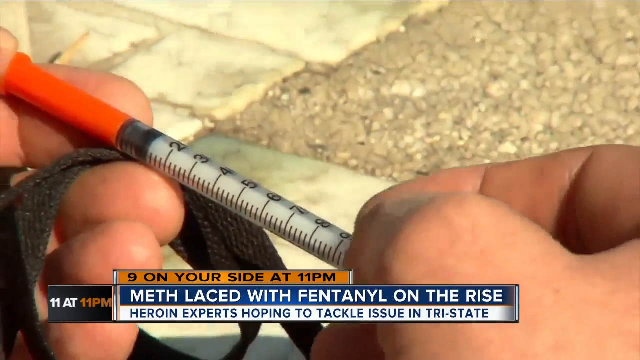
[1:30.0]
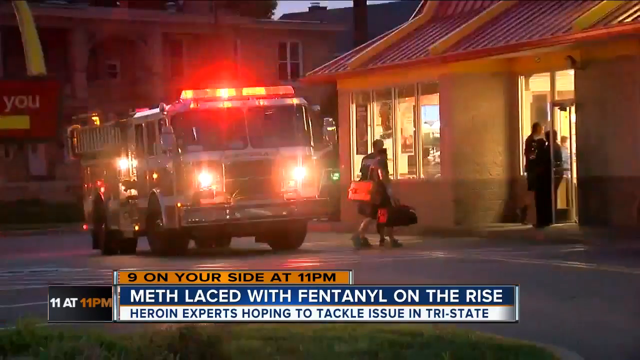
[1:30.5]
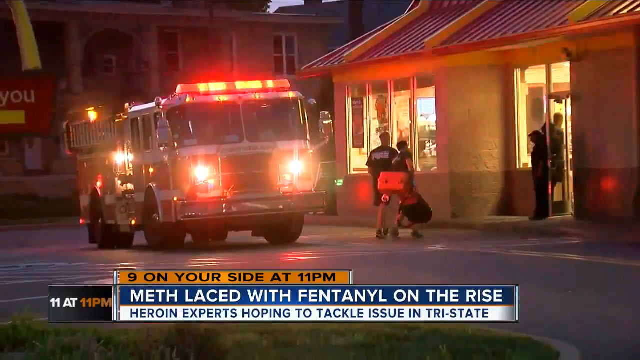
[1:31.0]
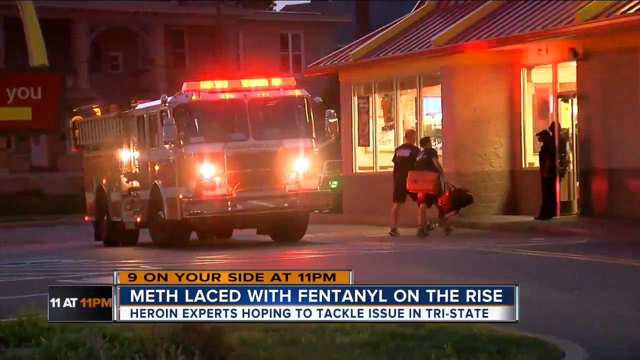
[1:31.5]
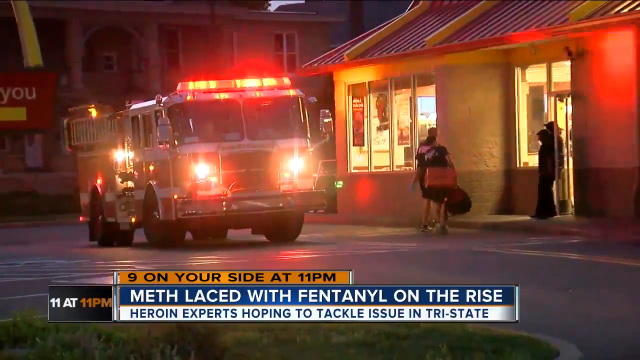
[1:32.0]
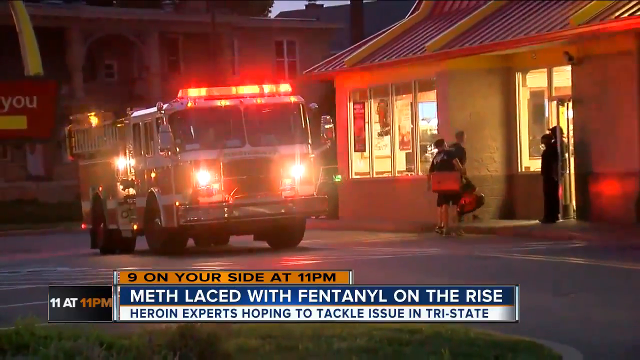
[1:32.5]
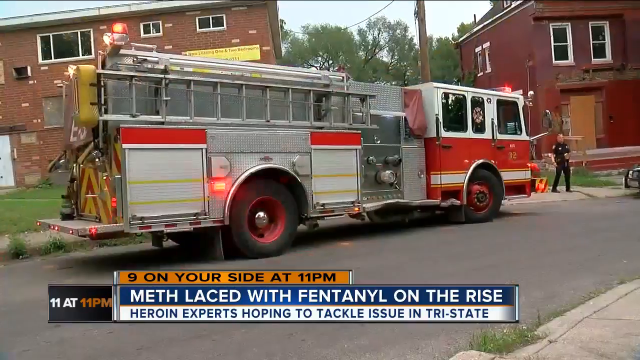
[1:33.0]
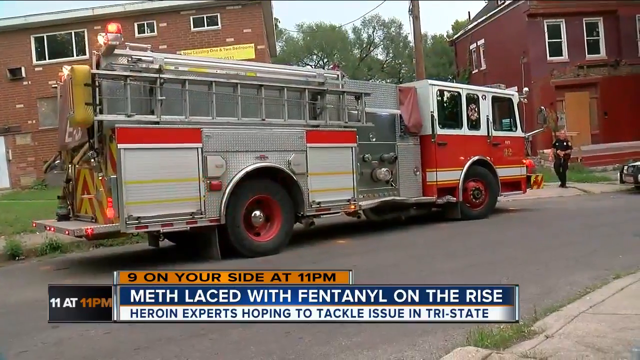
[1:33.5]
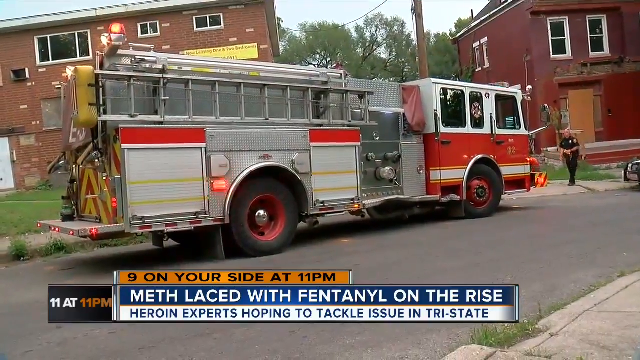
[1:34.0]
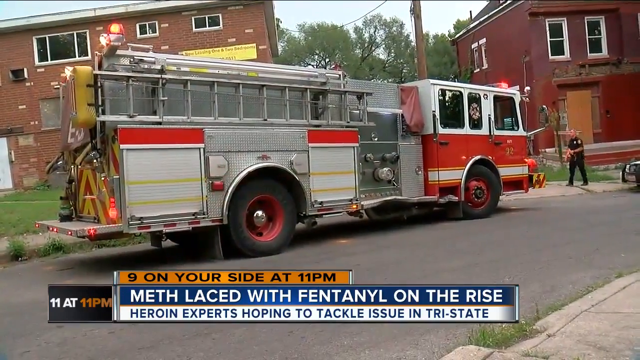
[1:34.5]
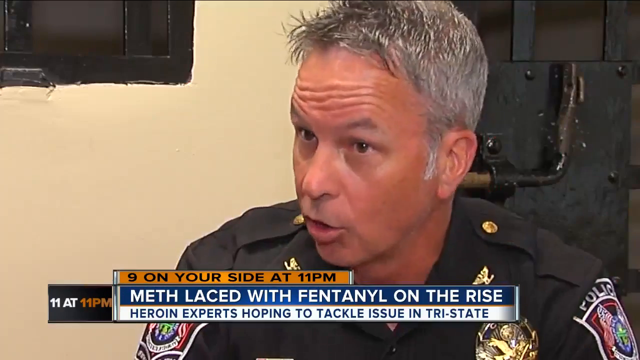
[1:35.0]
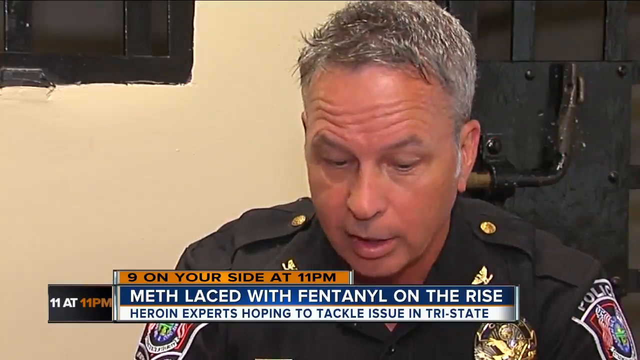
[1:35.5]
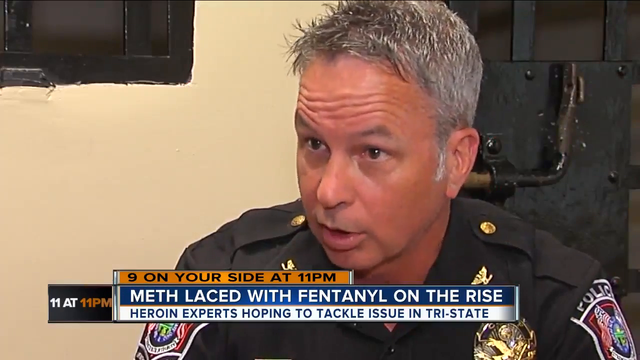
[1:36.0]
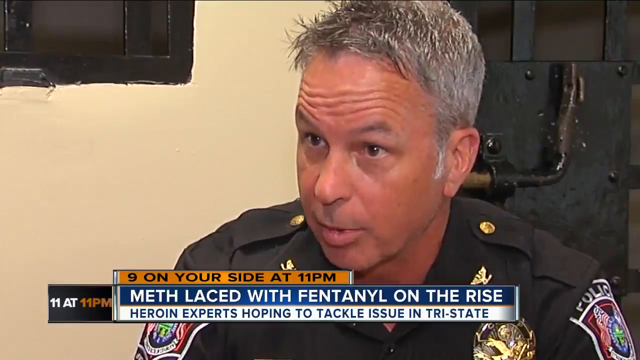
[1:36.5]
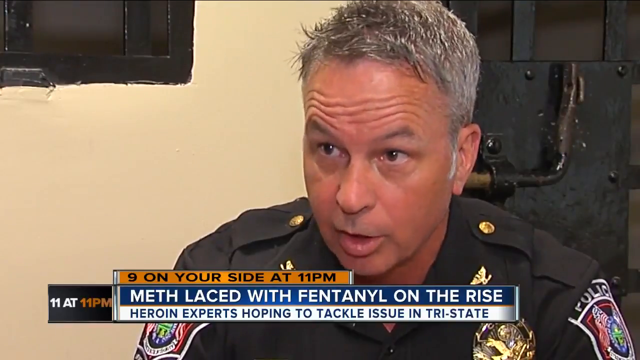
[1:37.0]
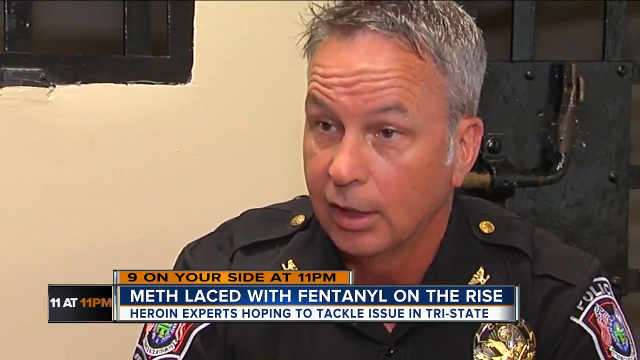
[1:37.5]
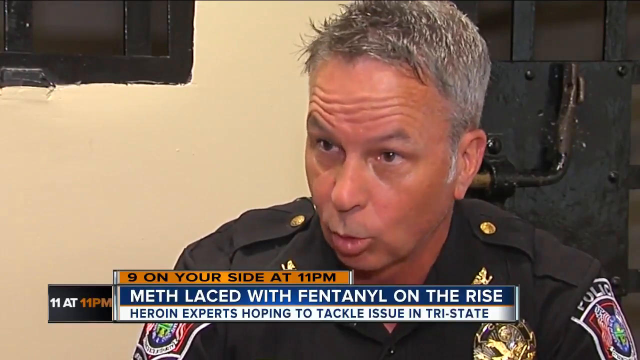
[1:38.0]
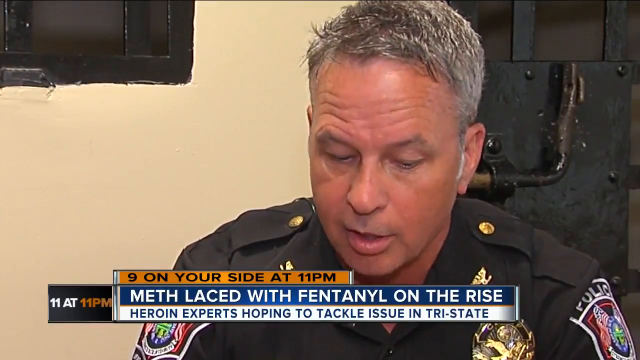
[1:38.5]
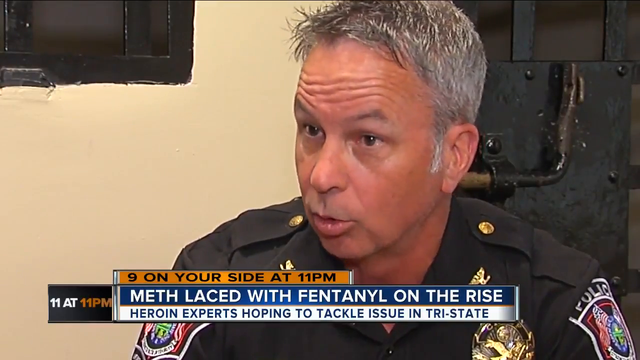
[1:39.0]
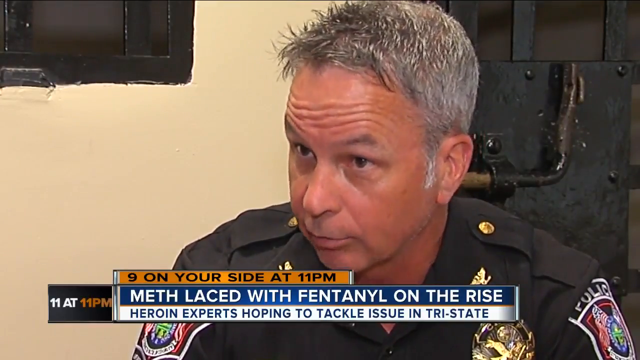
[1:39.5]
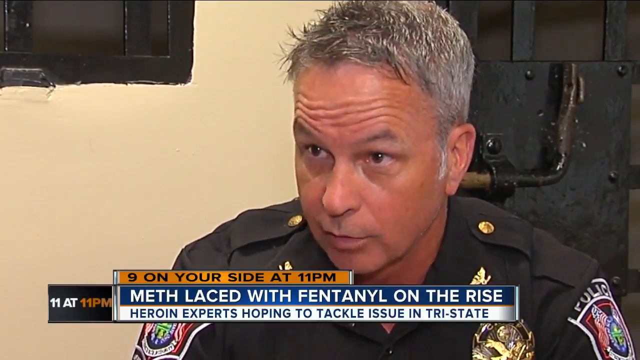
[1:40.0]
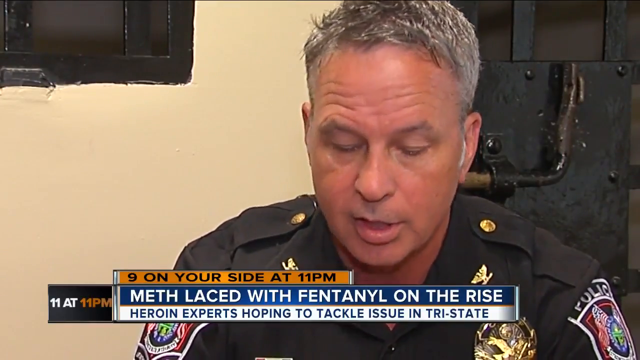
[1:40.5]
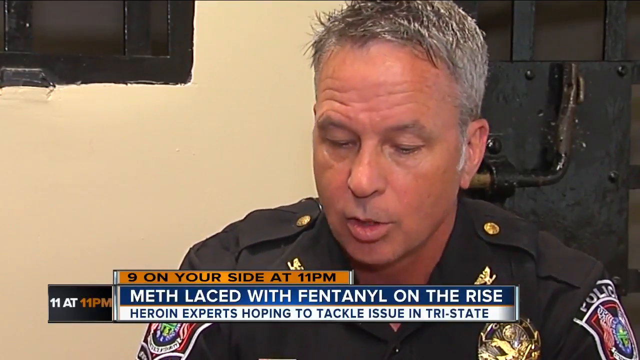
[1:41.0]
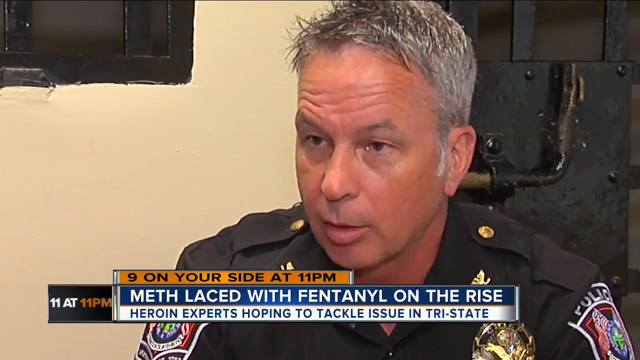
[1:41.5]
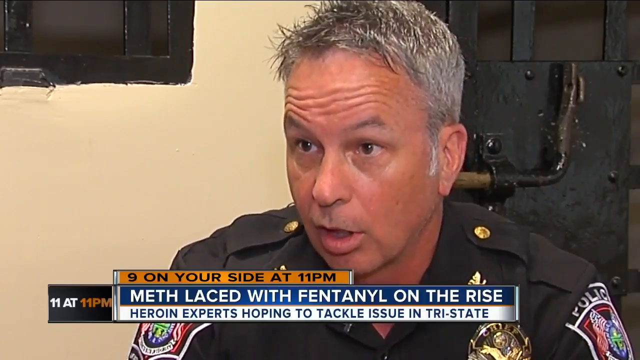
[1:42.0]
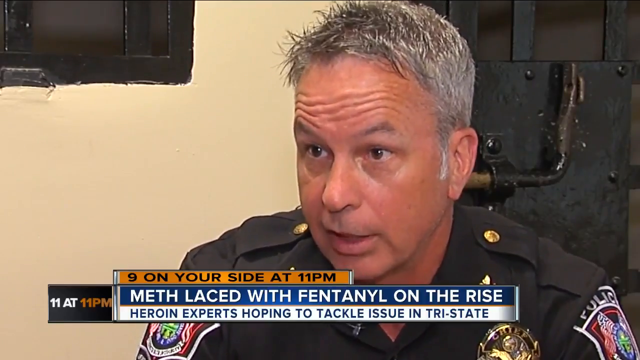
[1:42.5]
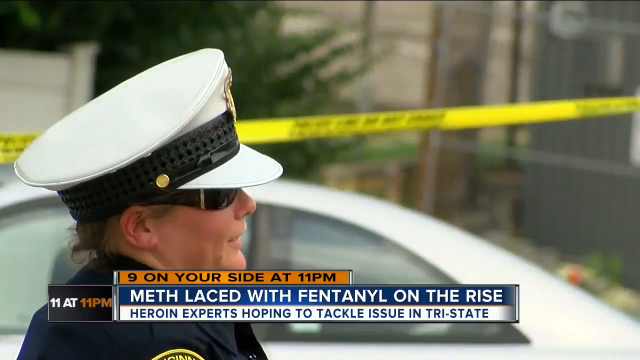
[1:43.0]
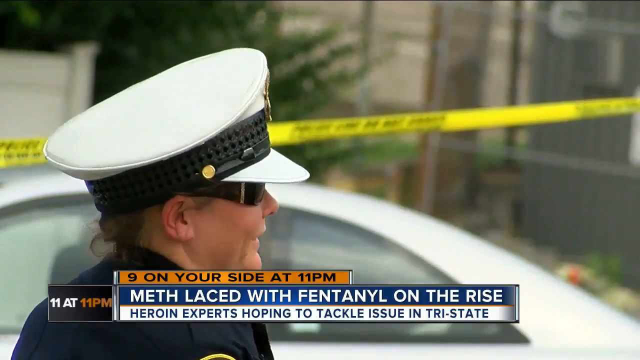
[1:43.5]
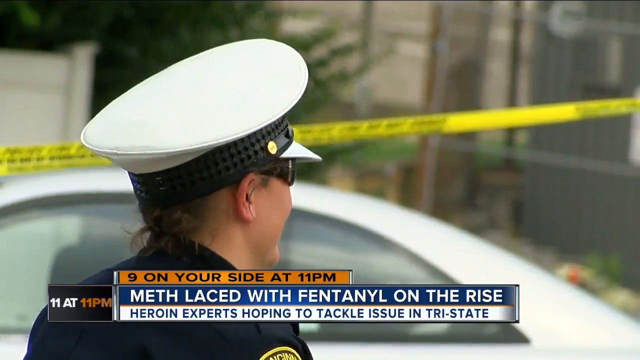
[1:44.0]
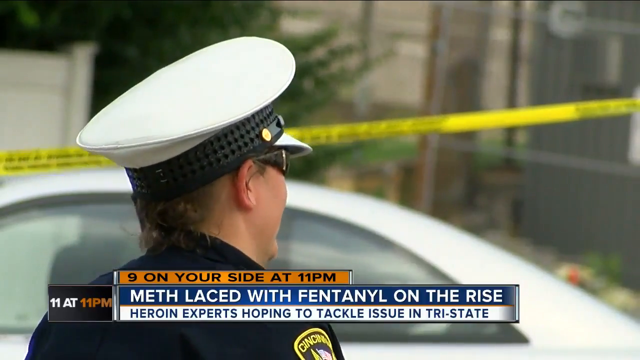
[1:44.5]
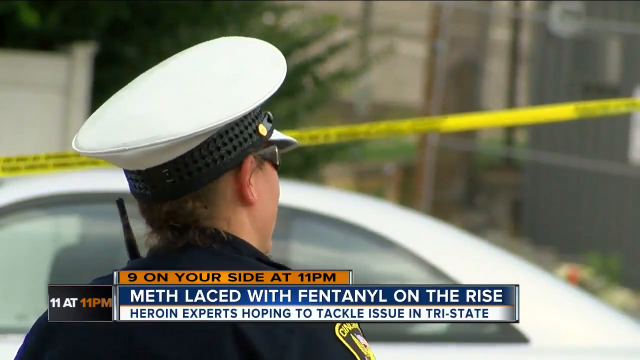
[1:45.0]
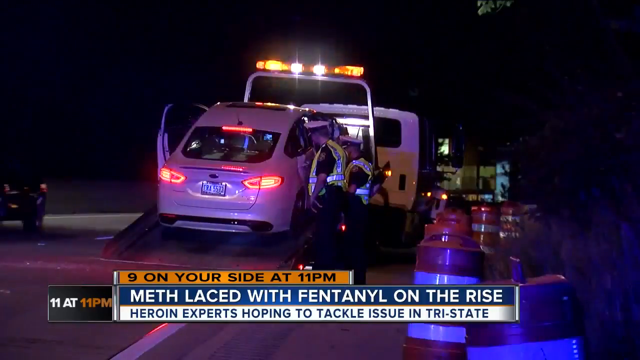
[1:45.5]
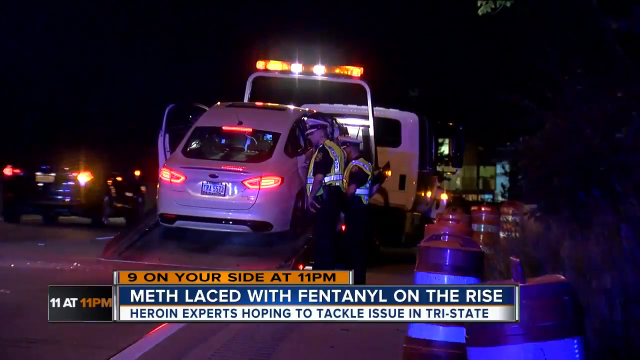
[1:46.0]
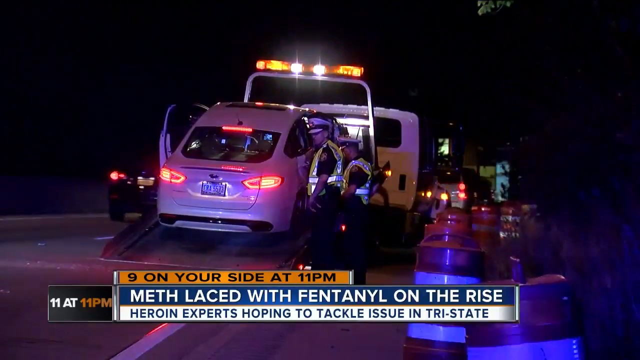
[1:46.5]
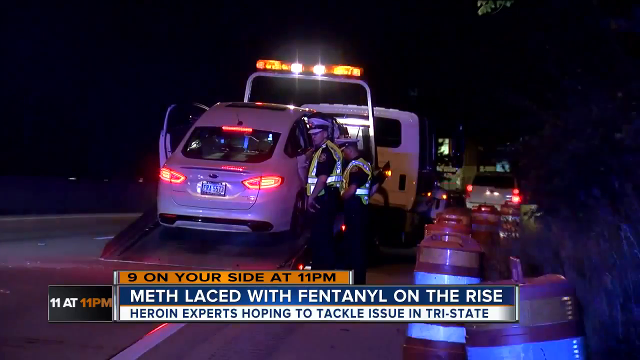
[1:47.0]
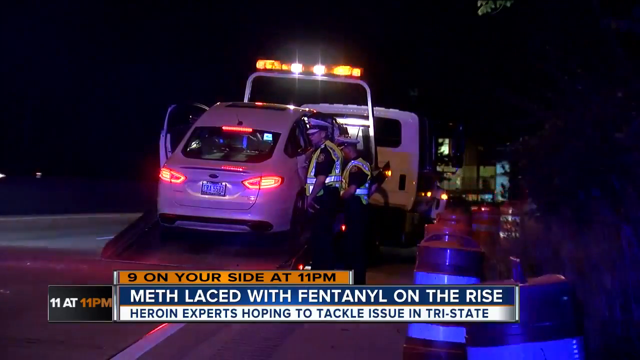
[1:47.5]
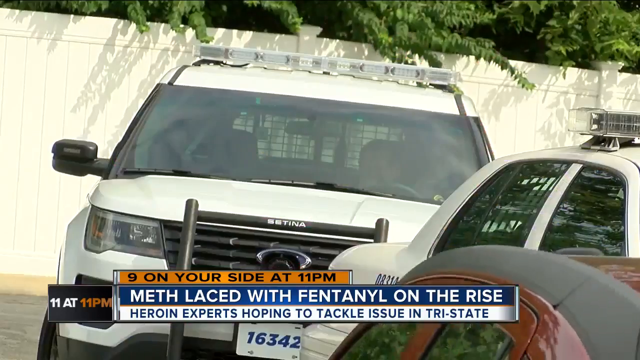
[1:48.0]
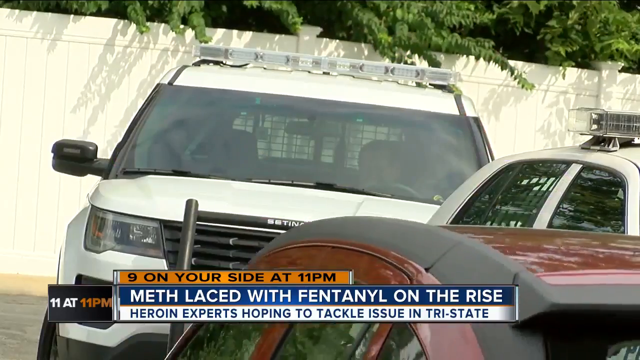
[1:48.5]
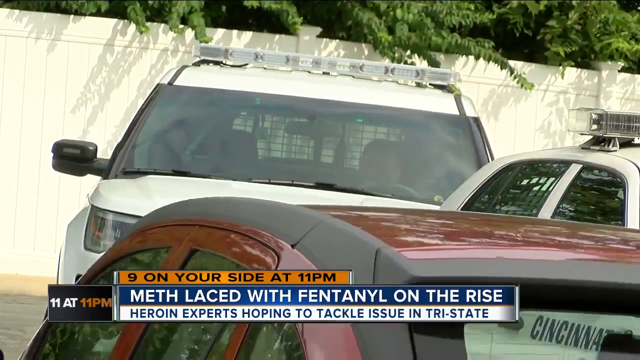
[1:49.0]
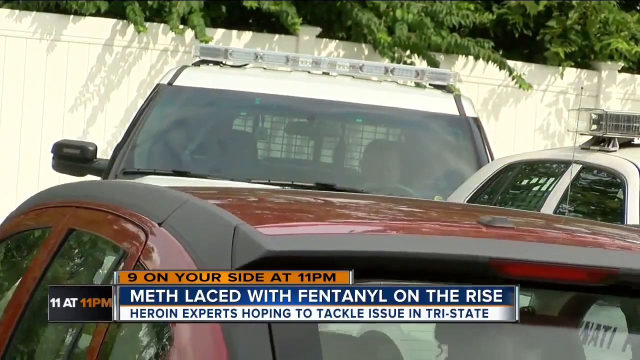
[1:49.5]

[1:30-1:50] A pair of hands holds a 1 ml syringe with graduations at 0.1 ml and 0.02 ml and an orange cap on the needle; the straps of a bag are visible in the left hand. A fire engine with its lights flashing follows, with the golden arches in the background. EMTs walk into a one-story building, two of them with orange equipment bags, while someone holds the door open for them. Another fire engine is outside a house, with a semi-detached house in the background and a building on the right side of the screen. The policeman is talking again, shaking his head and raising his eyebrows. A policewoman wearing a white hat with a black band is seen from the back. A white Ford is towed by a tow van, seen from the back; it is dark outside, the tow truck's lights and the car's lights are on, and a few policemen are there. The next shot shows a car park with a white car in the background with someone in the driver's seat, and a red car trying to pull in.